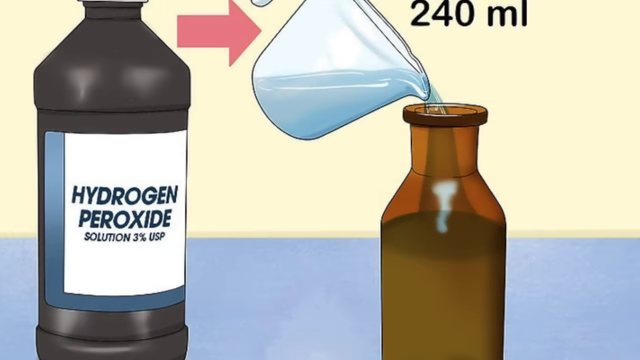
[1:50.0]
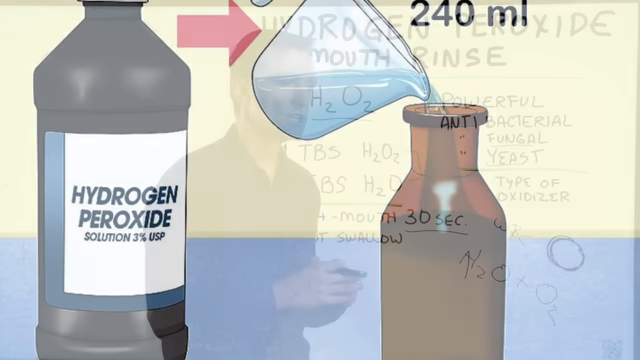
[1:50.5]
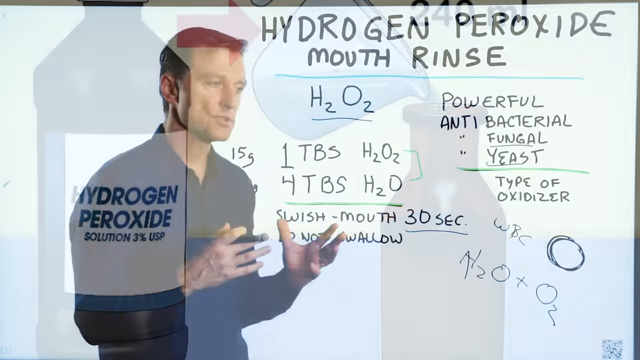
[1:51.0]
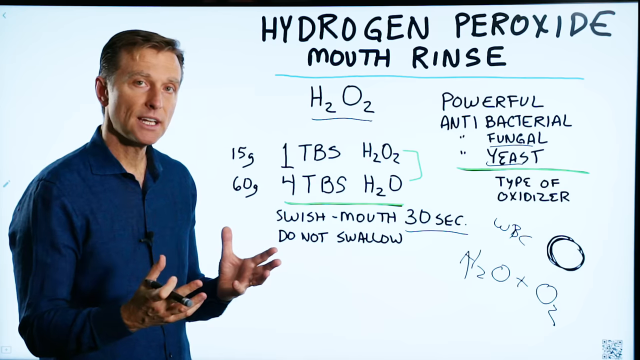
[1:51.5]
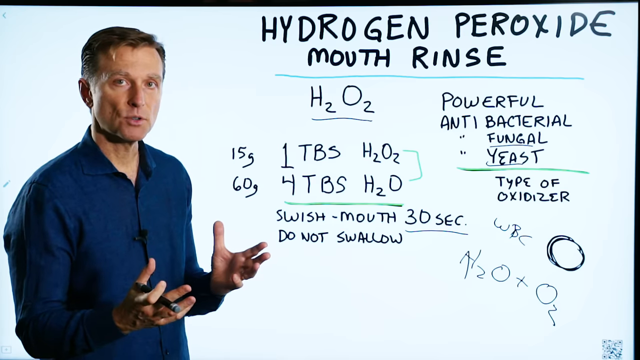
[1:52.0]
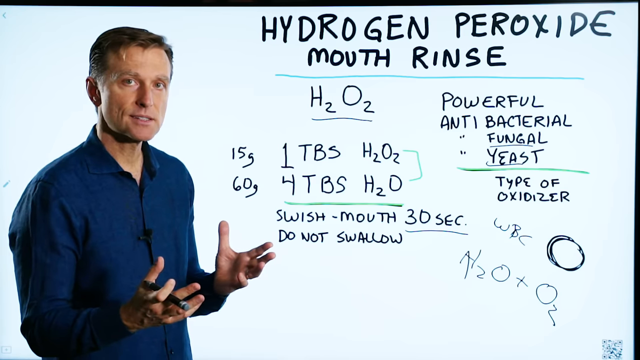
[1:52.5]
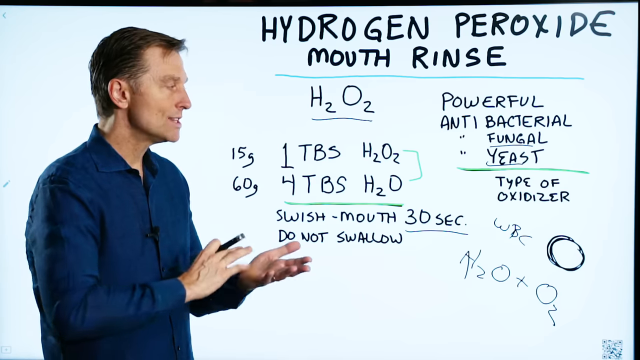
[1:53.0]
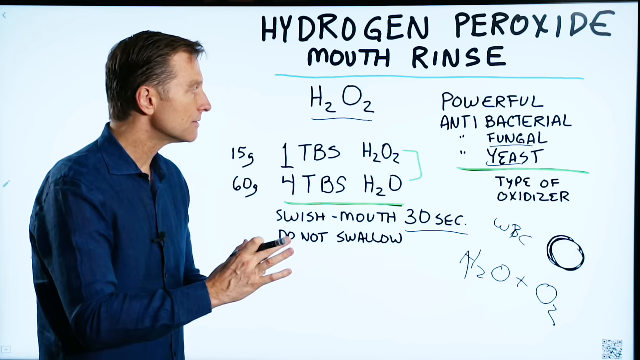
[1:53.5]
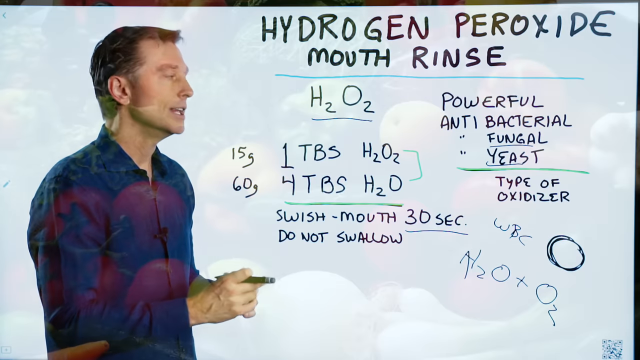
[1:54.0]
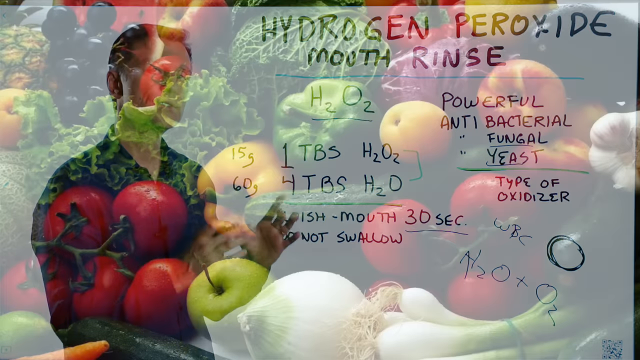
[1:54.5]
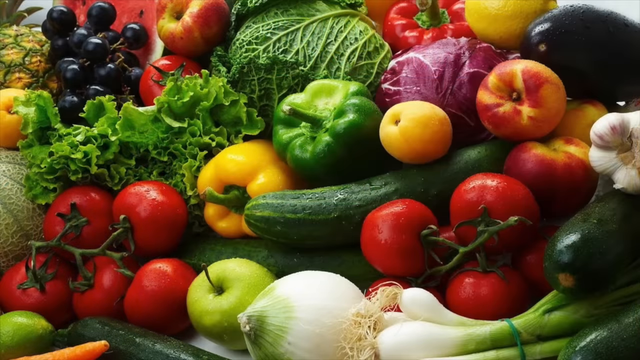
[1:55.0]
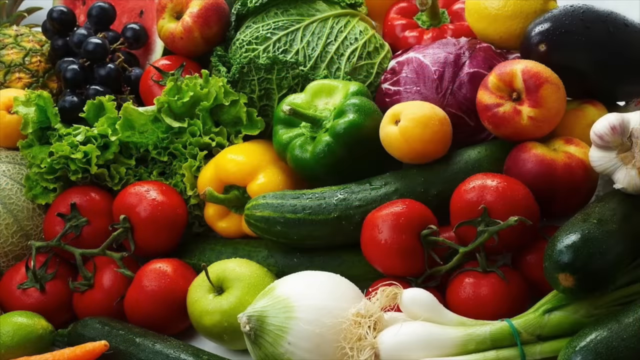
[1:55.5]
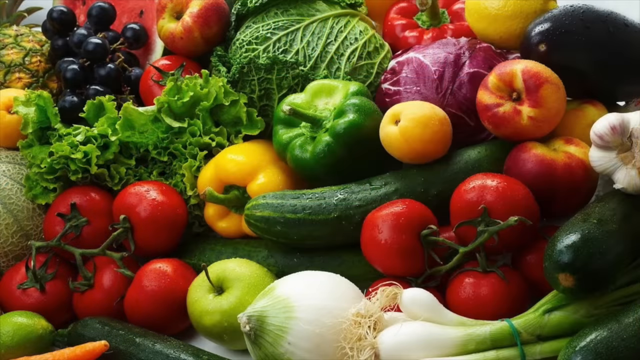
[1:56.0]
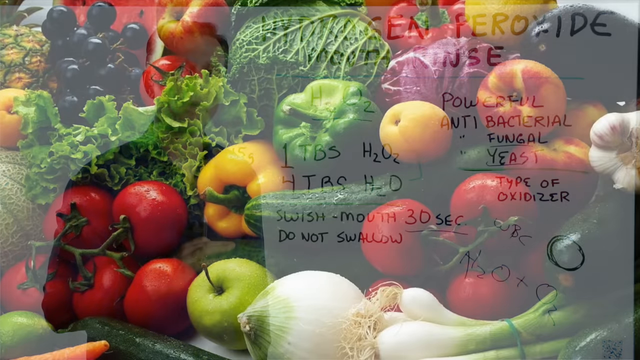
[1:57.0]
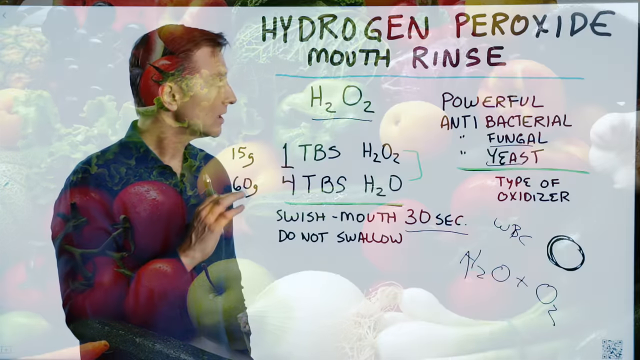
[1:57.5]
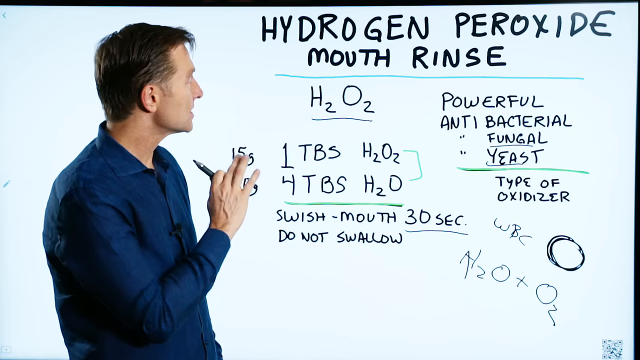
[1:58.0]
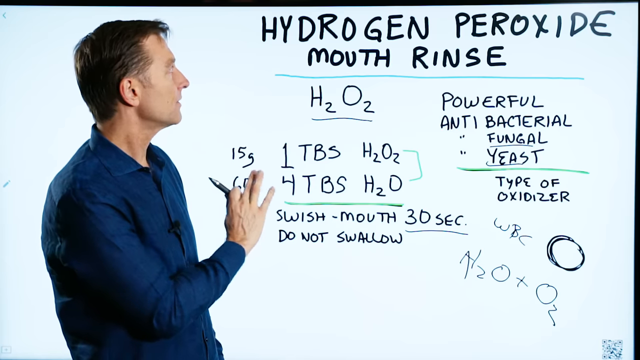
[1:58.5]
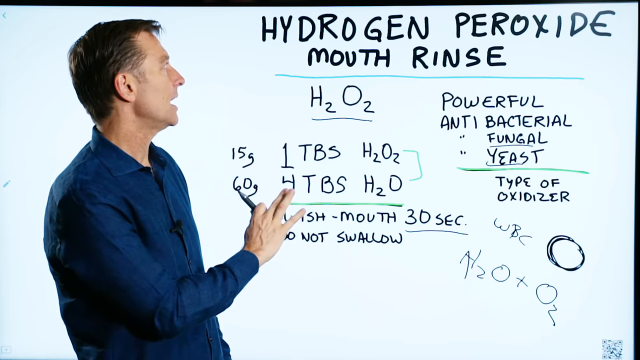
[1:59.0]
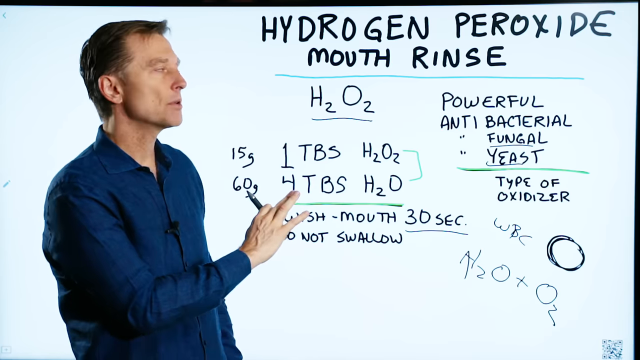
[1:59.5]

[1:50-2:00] Onions, broccoli, green pepper, yellow pepper, and tomatoes are shown, and then the man appears again. Editing effects flip and swipe the background from the vegetables to fruits within moments. Near the fruits are apples, grapes, peaches, various other items, and something that looks like lettuce. The background flips from the fruits back to the man presenting.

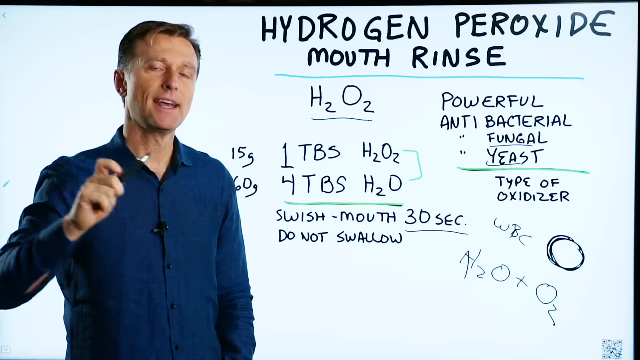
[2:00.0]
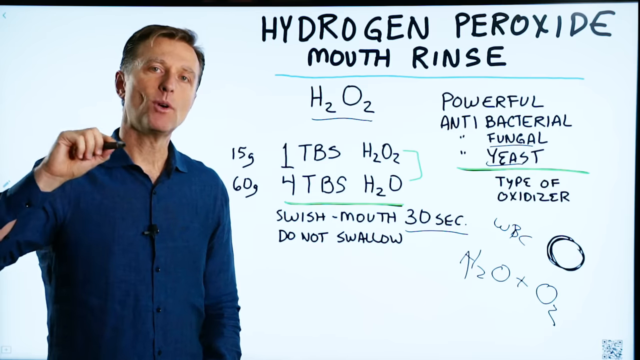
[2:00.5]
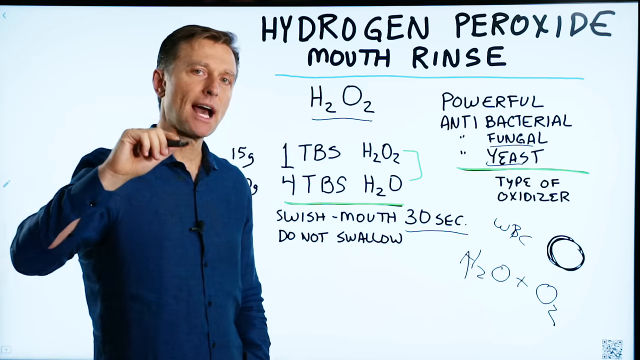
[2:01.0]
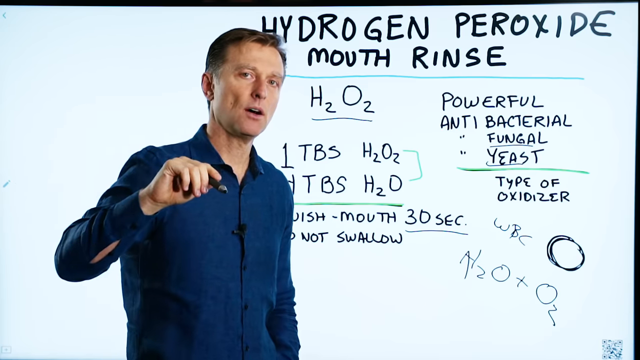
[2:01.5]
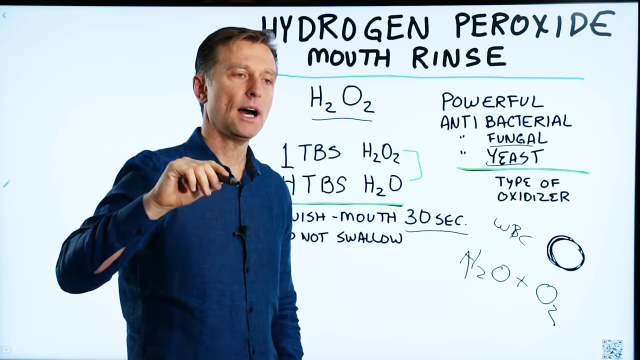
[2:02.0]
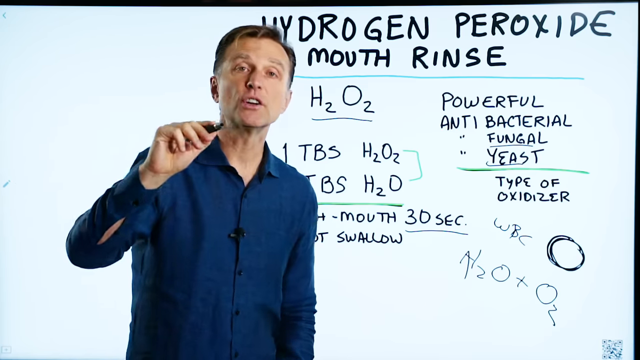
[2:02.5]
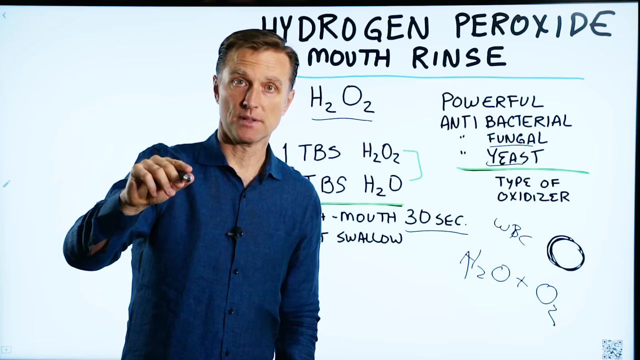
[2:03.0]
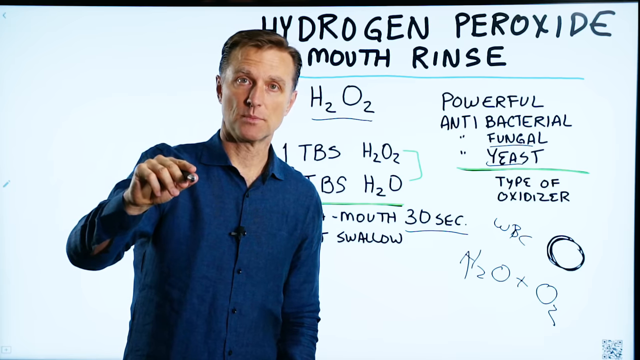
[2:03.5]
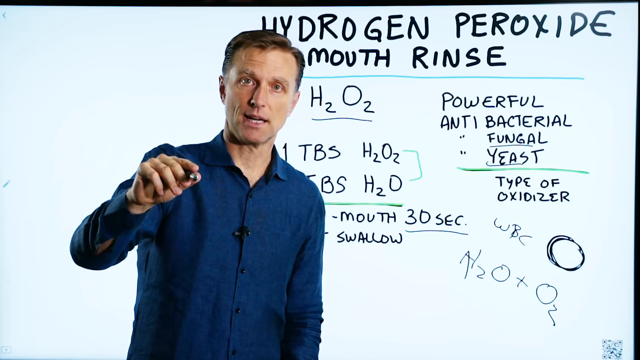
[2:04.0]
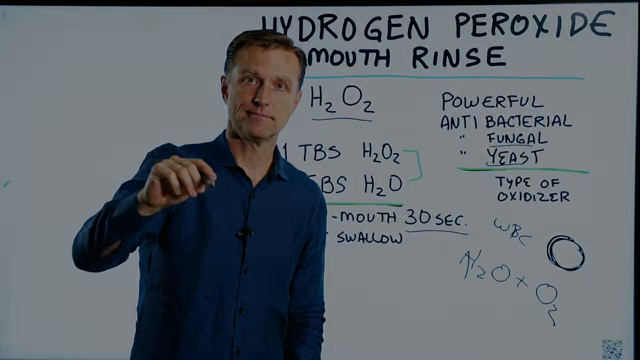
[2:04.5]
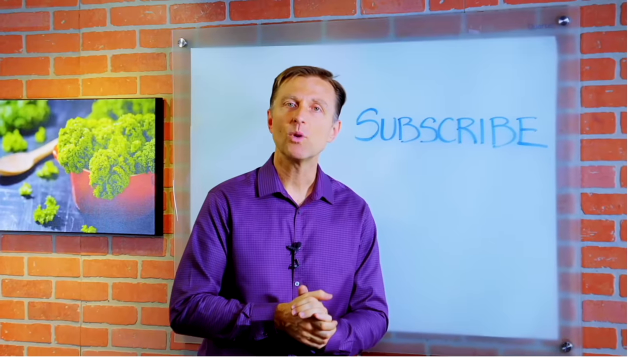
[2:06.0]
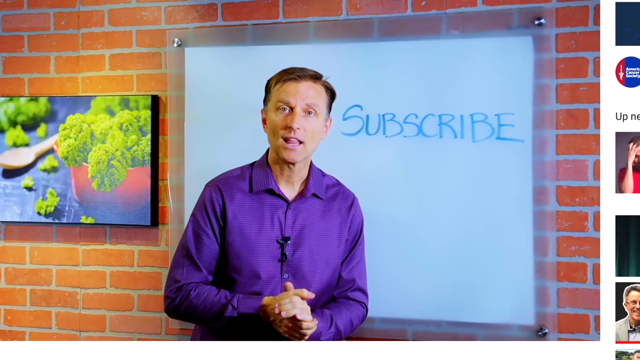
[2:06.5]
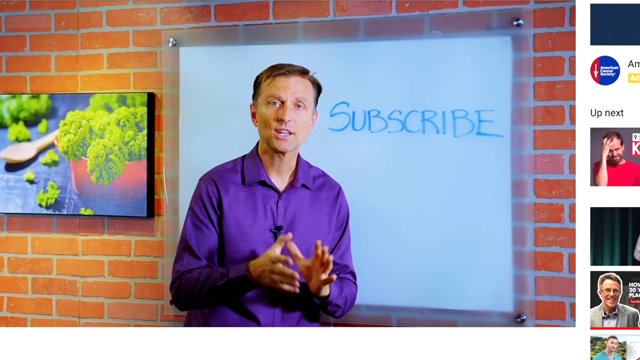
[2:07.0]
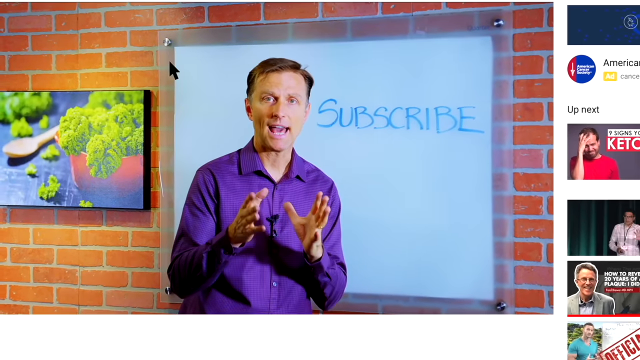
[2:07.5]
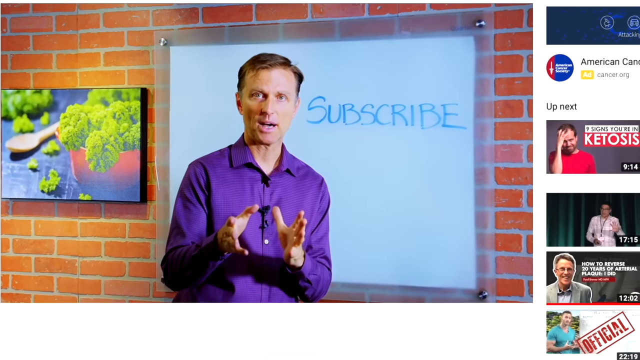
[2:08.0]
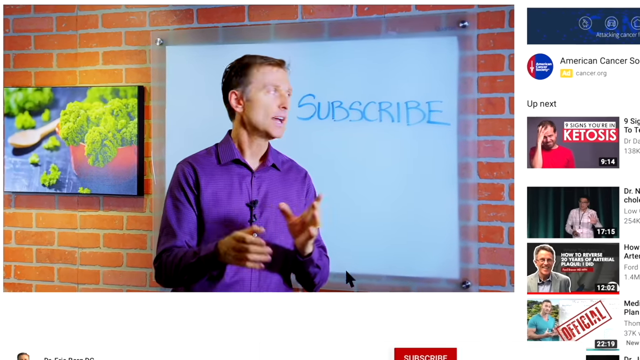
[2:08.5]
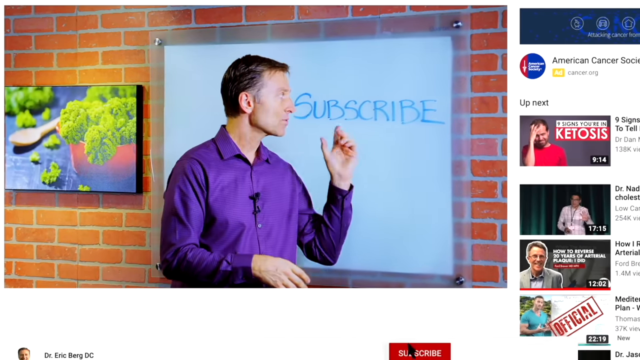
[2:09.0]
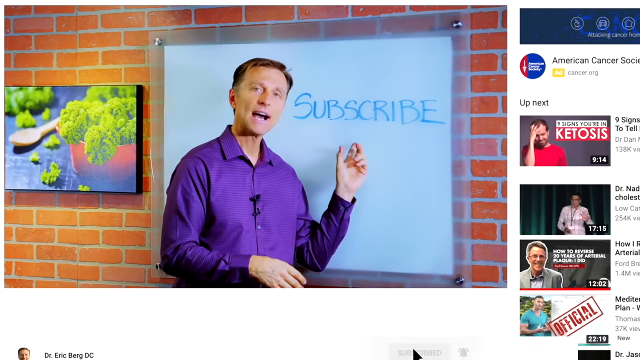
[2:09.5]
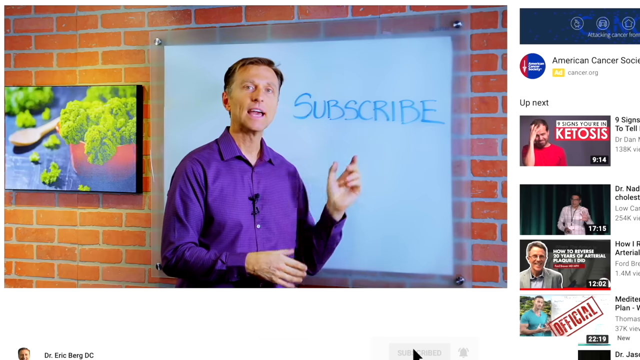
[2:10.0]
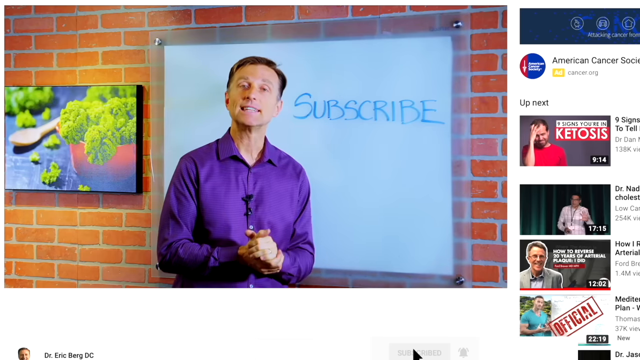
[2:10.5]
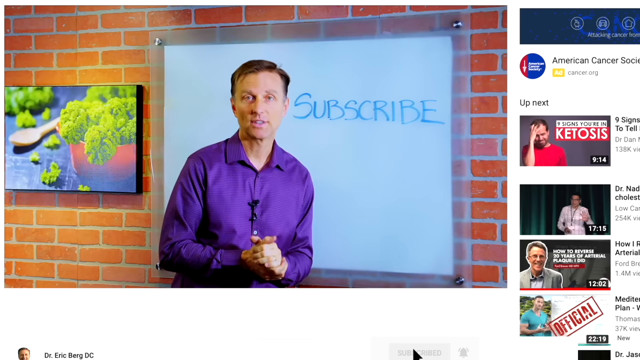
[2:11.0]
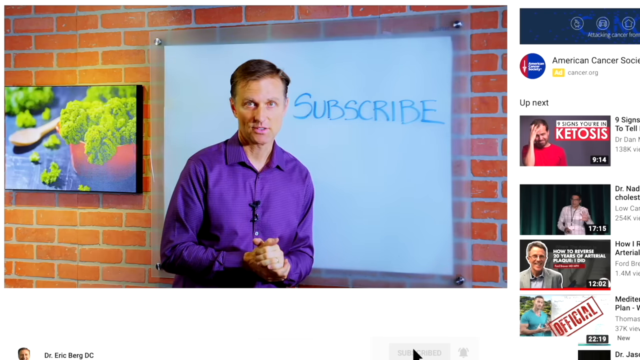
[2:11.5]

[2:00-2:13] The man uses the marking pen to indicate something. Then there is another flip: a cursor appears, as if someone is playing a video, and the same man is now wearing a purple shirt. Behind him is a brick wall with lines, with a screen on the wall showing something with a wooden spoon, and a white background on which "subscribe" appears in blue capital letters. The man moves his hands toward the back while talking, apparently asking viewers to subscribe to his YouTube channel. The cursor moves to the subscribe button. On the right-hand side, other items appear on a white background next to the man, including text reading "American cancer" and a video reading "science" and "you are in ketosis"; four videos appear there in total.